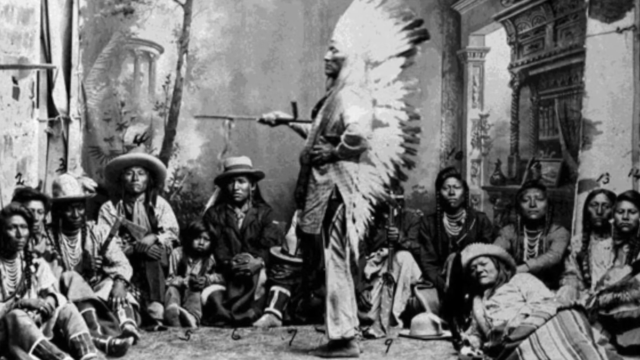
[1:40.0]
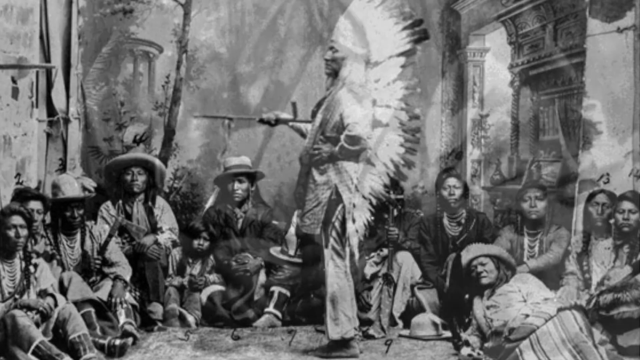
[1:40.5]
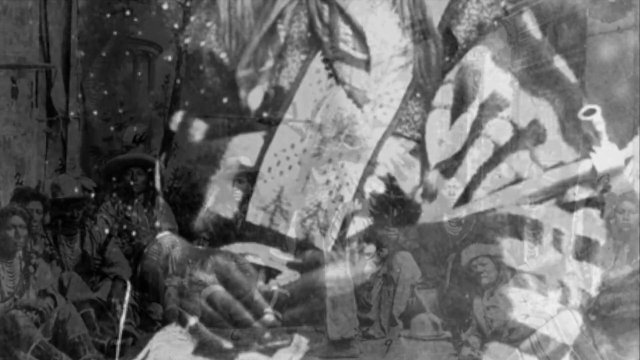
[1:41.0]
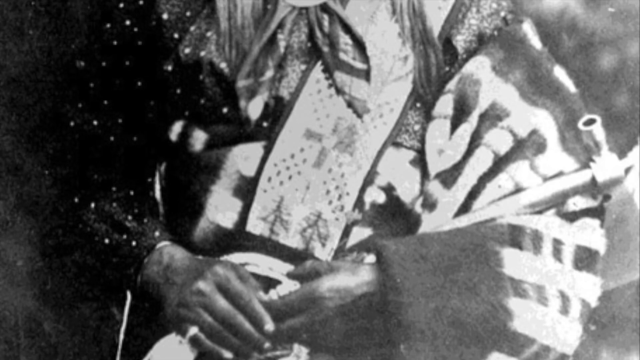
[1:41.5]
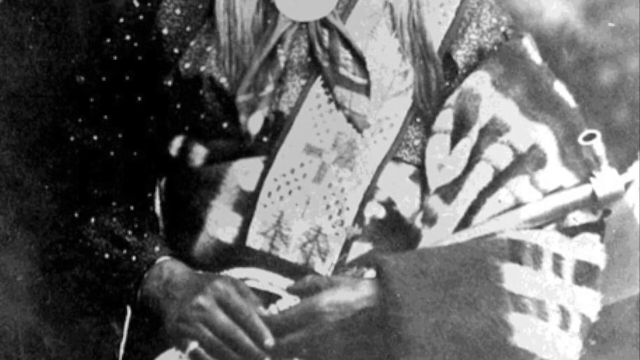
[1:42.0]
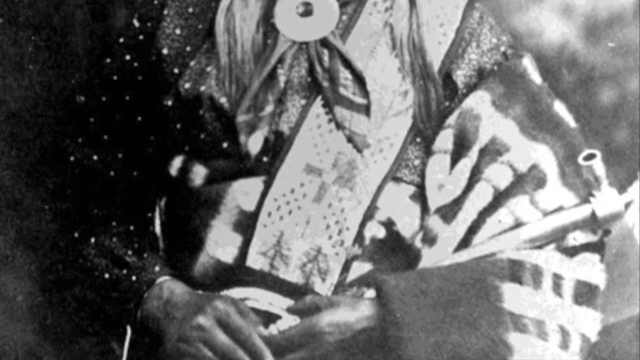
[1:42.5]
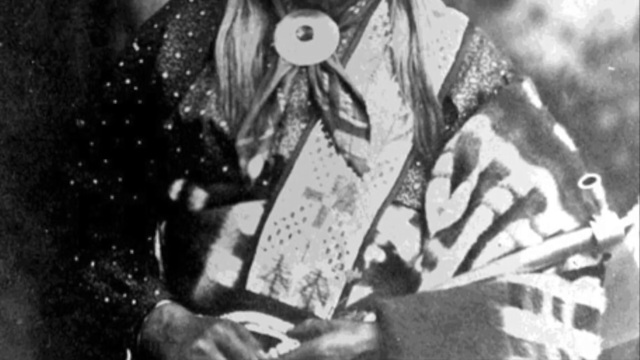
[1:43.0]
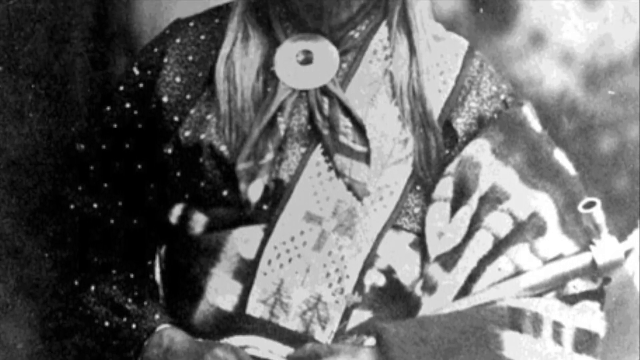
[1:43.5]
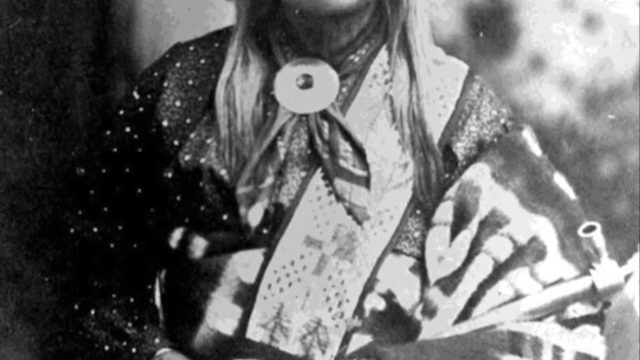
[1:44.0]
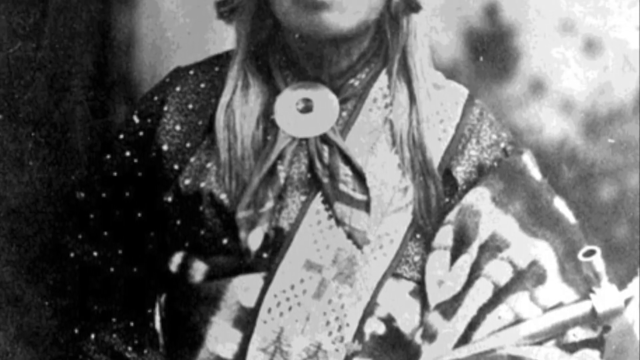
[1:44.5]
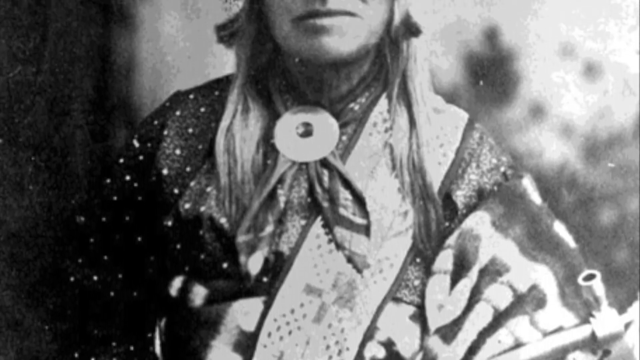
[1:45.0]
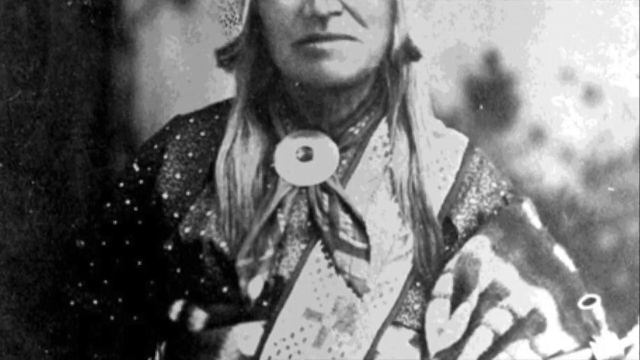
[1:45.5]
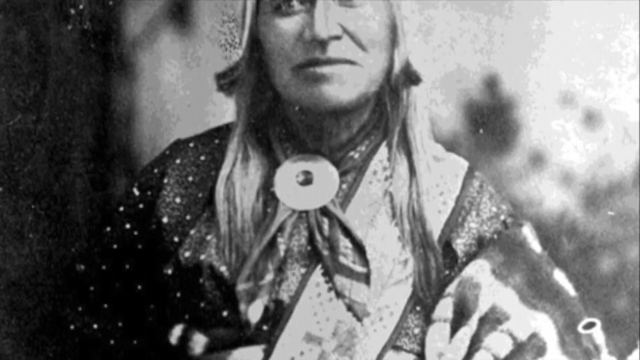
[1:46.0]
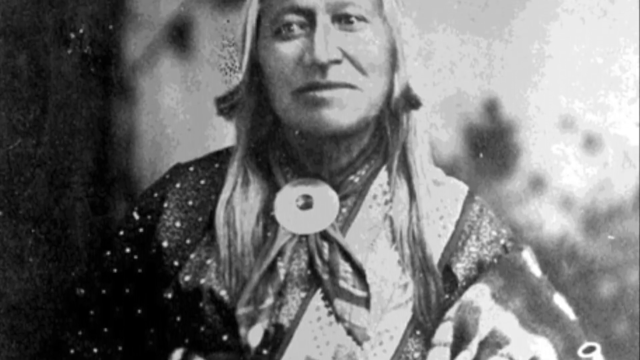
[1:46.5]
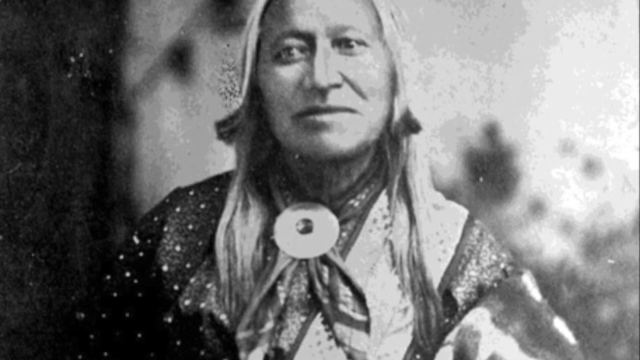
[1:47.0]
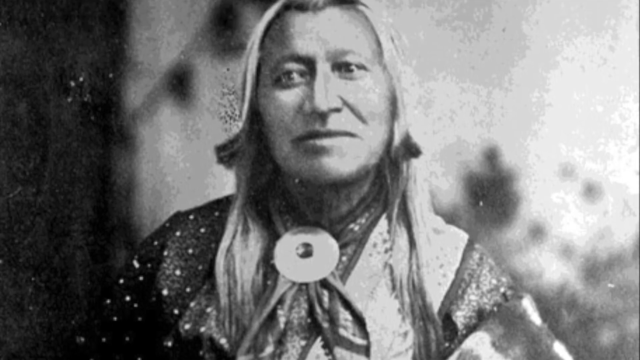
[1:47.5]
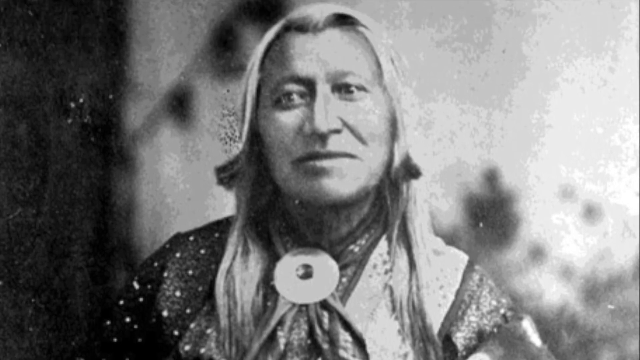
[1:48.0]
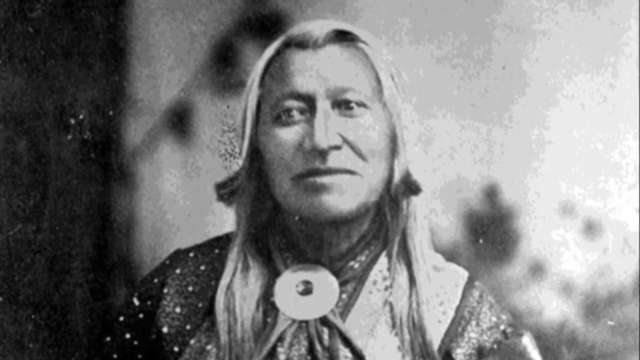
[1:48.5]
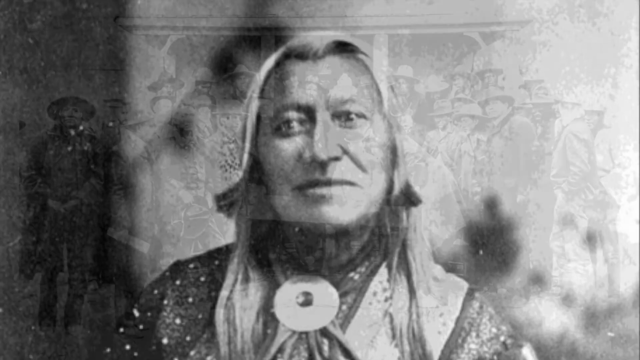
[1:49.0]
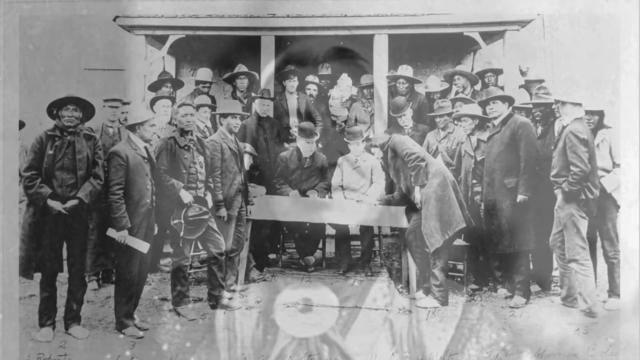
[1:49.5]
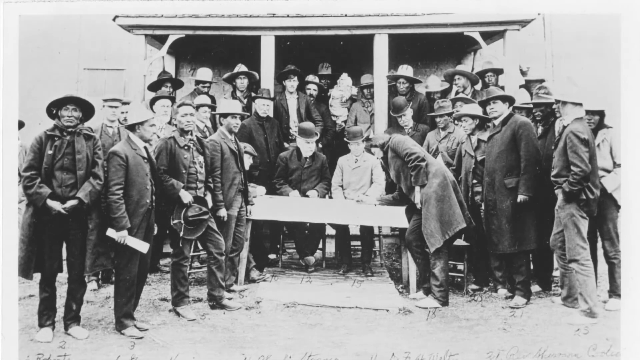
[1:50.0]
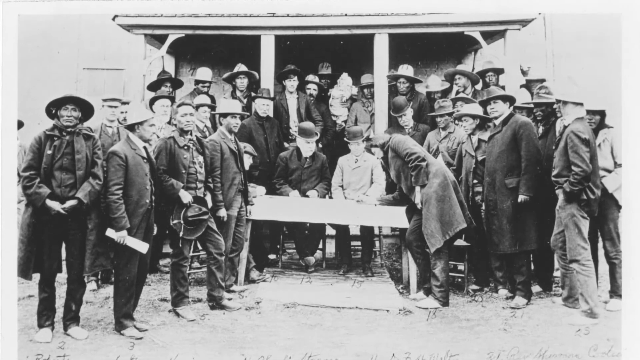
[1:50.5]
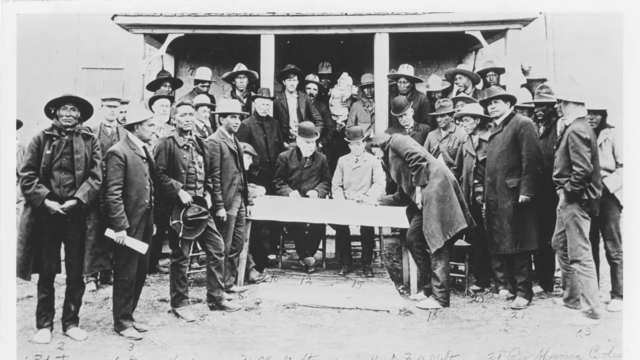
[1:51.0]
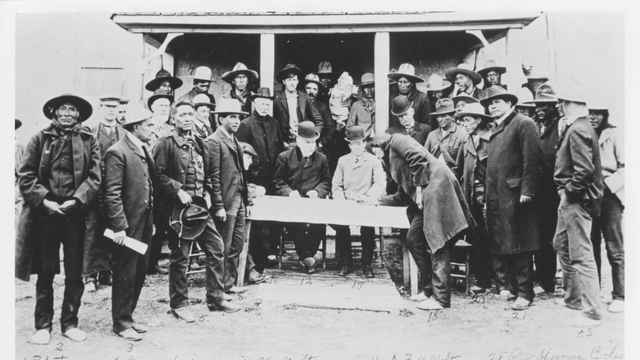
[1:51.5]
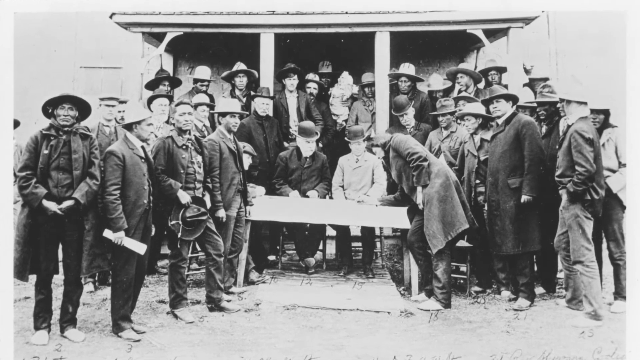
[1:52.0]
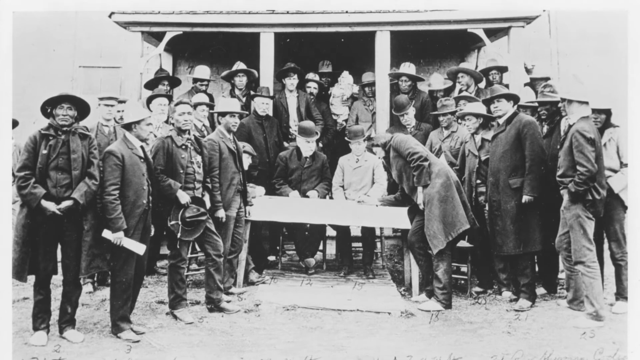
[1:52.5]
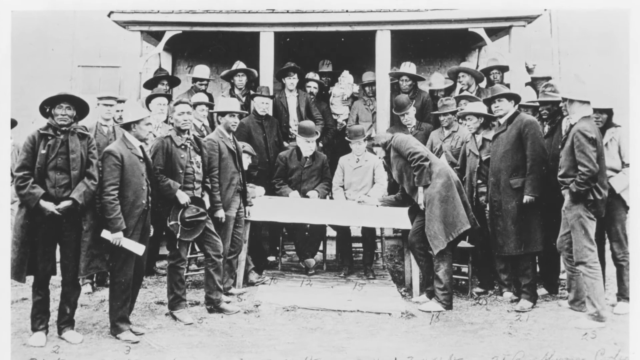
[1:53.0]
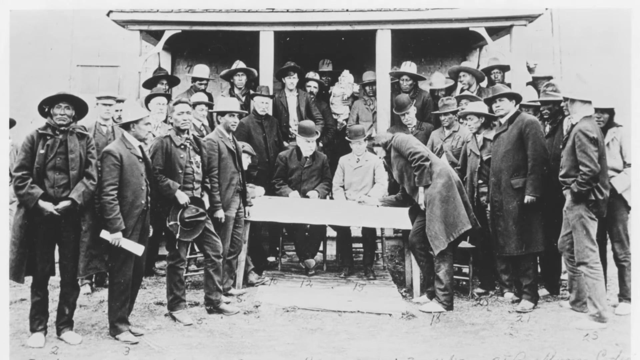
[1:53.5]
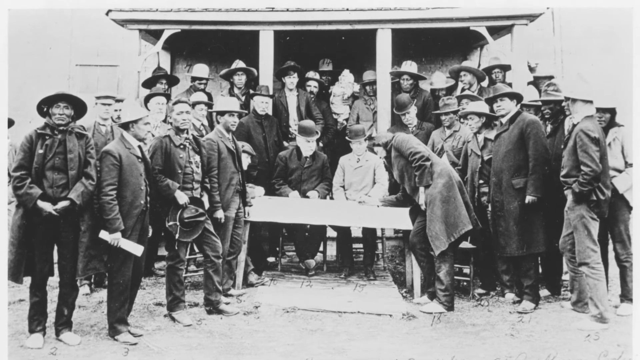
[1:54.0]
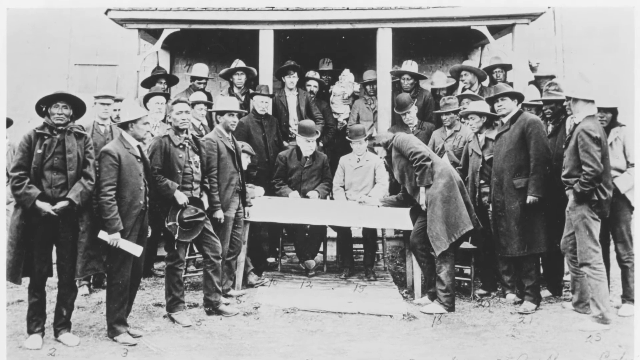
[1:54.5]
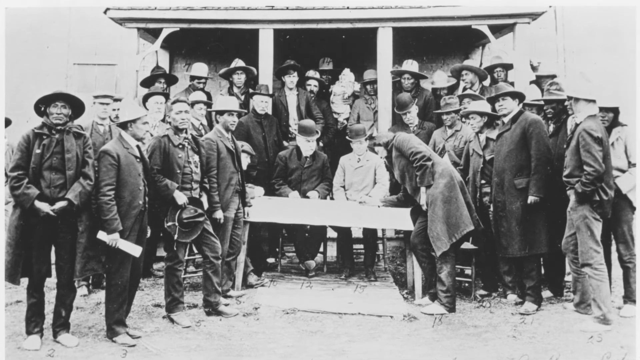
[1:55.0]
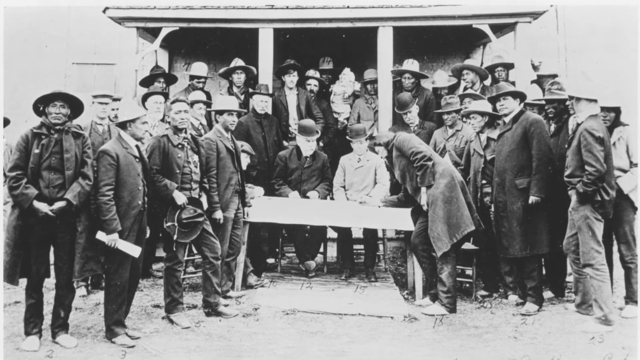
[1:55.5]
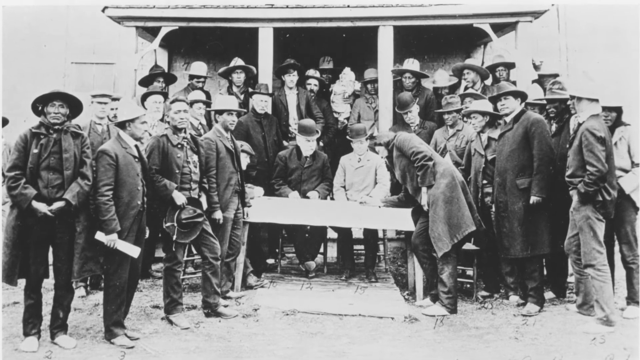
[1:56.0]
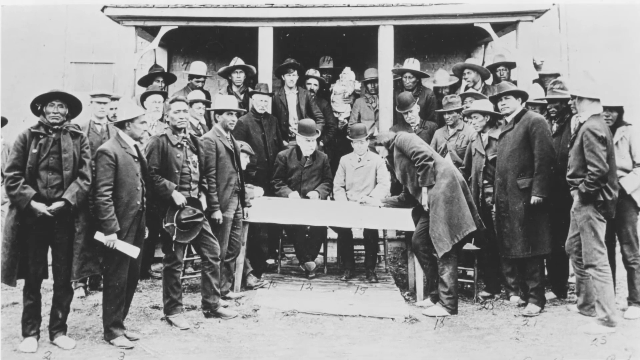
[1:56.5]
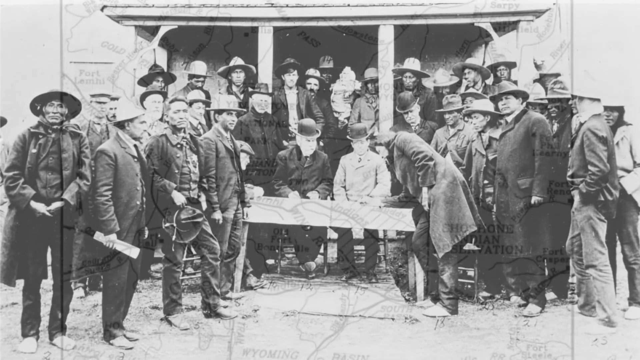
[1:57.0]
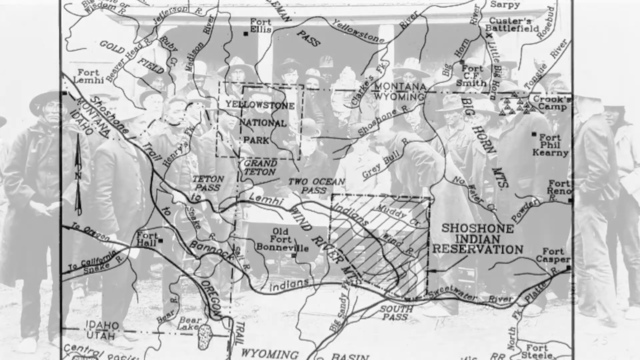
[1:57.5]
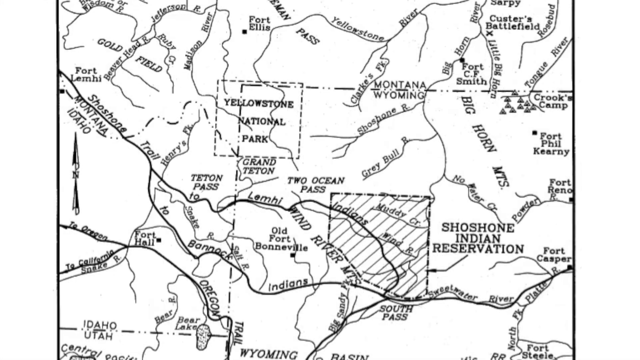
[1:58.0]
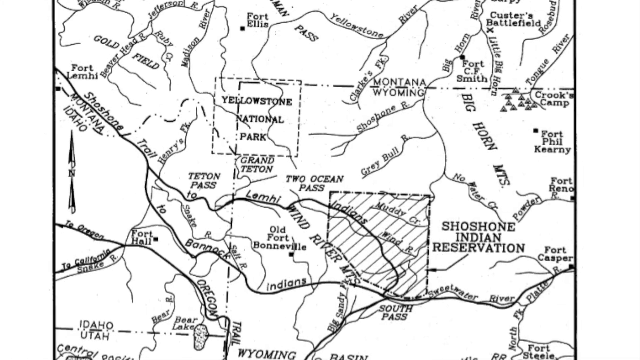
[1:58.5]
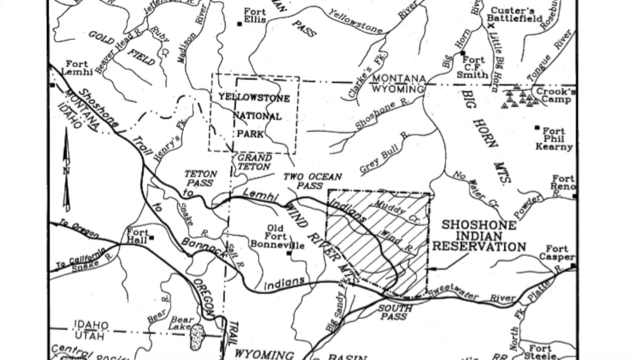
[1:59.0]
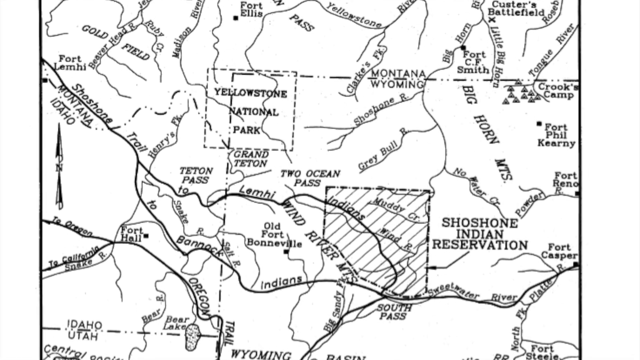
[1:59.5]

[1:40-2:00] An Indian chief stands sideways in a room in a profile view, showing off his headdress, which starts at the top of his head and goes all the way down his back to the upper part of his legs. Members of his tribe are seated on the floor all around him. The image shifts to another Indian holding a peace pipe and staring directly at the camera. The next image shows a group of men standing outside a building, probably in the mid-to-late 1800s; they appear to be signing some type of documents on a paper on a table in front of a man sitting behind the table. The next image is a map of a territory in America. The line across the top center of the map is the boundary separating Montana and Wyoming. Yellowstone National Park is outlined, the Shoshone Indian Reservation is named, and other cities and areas are also named.